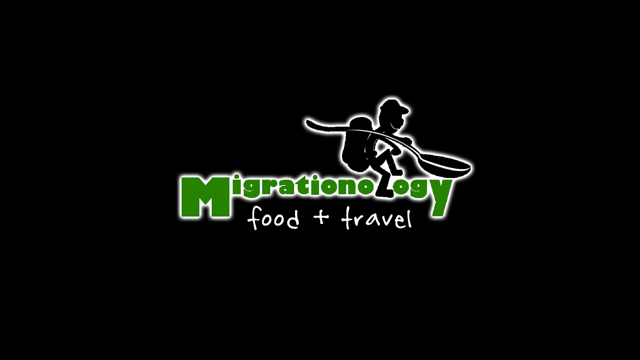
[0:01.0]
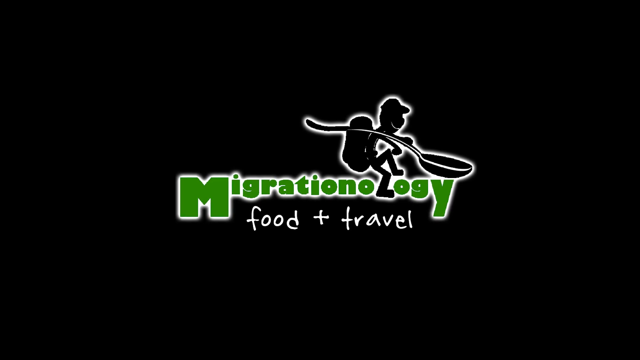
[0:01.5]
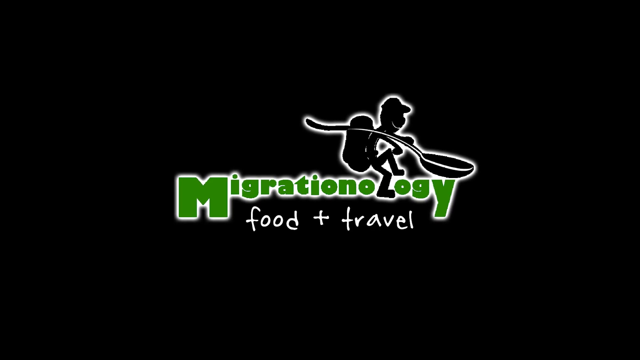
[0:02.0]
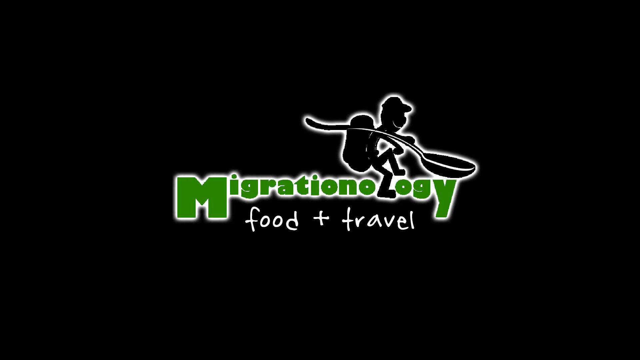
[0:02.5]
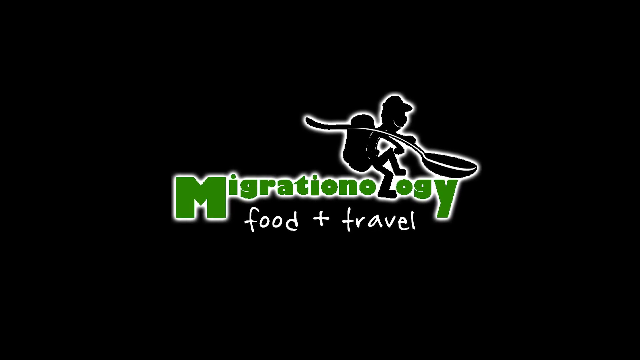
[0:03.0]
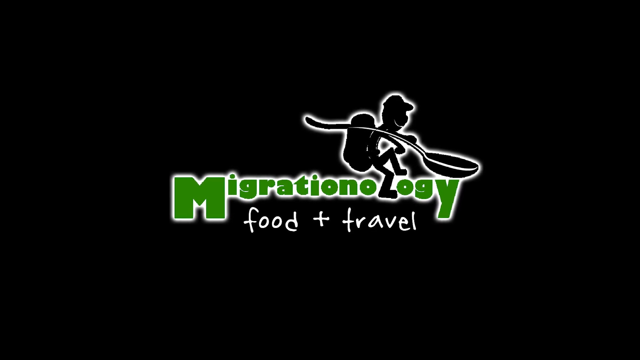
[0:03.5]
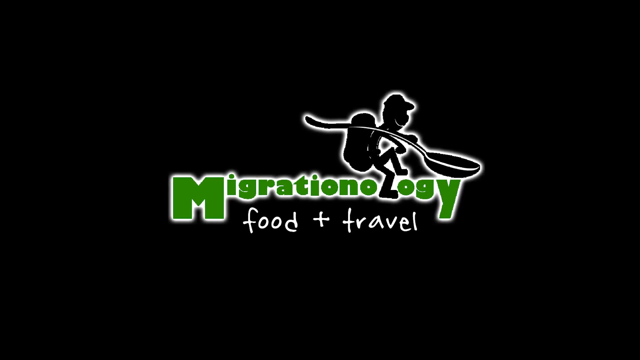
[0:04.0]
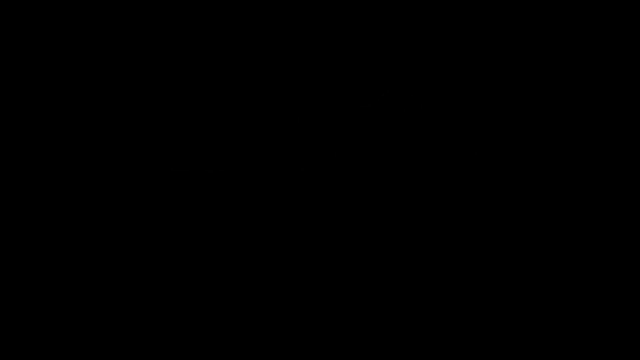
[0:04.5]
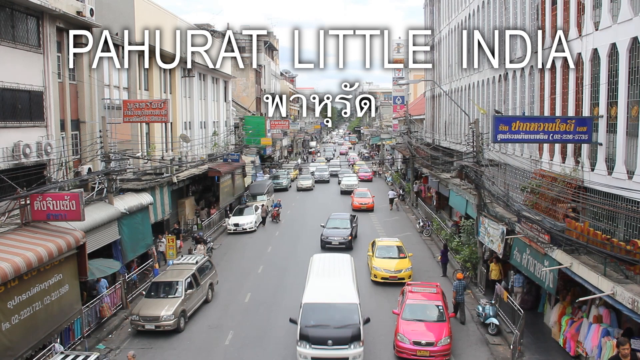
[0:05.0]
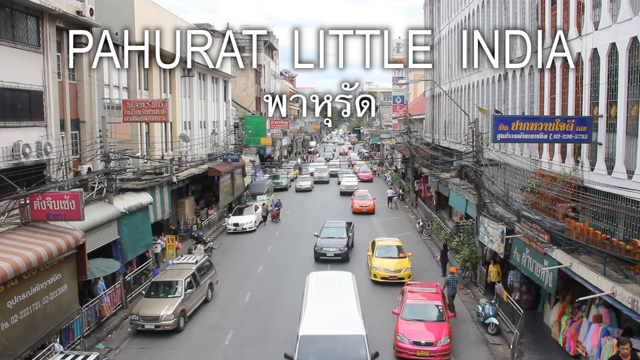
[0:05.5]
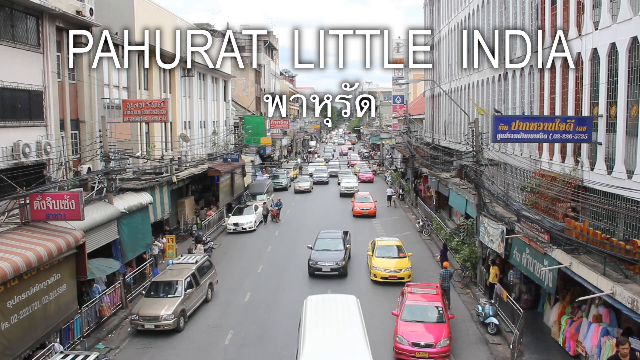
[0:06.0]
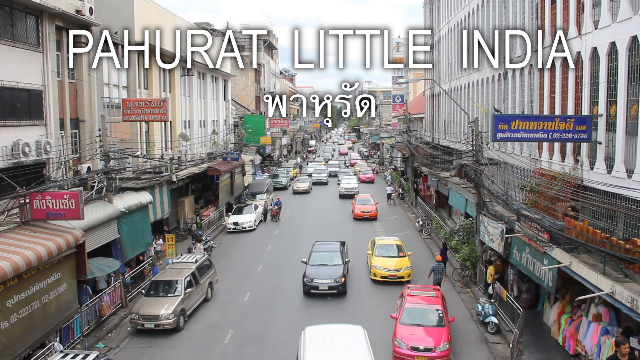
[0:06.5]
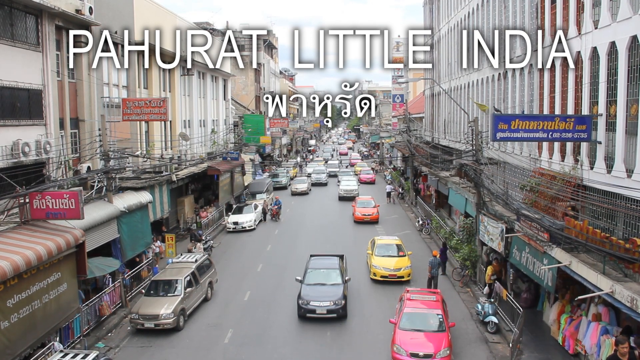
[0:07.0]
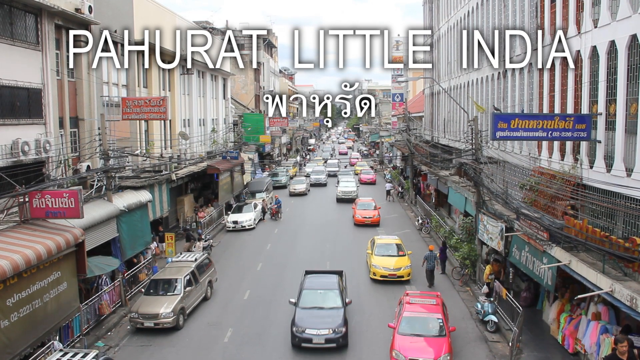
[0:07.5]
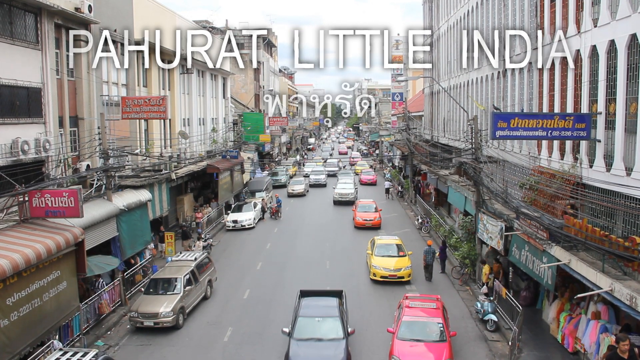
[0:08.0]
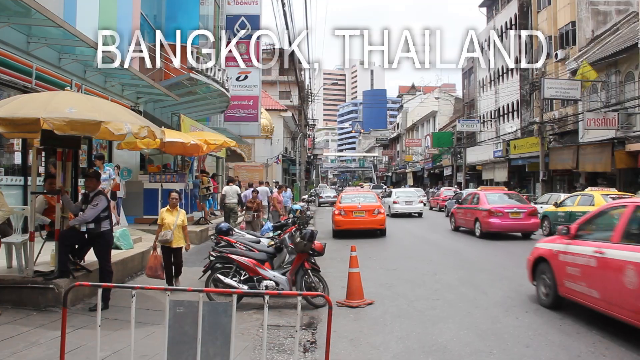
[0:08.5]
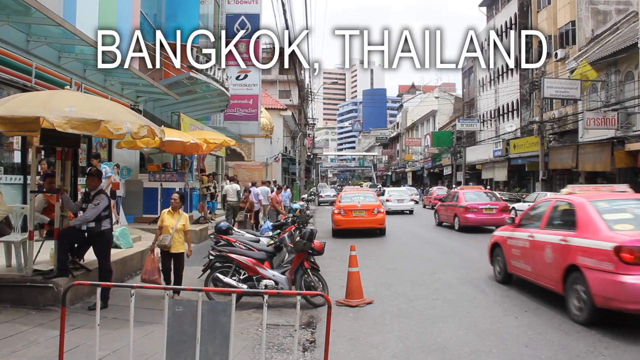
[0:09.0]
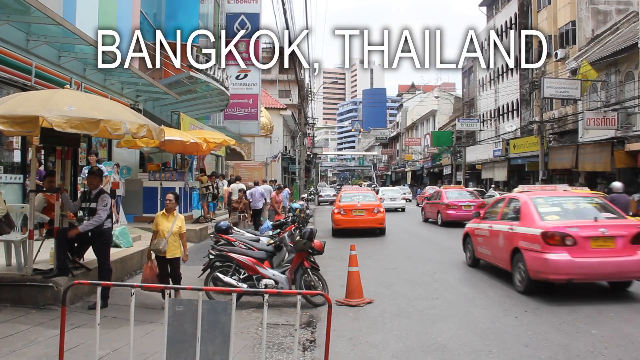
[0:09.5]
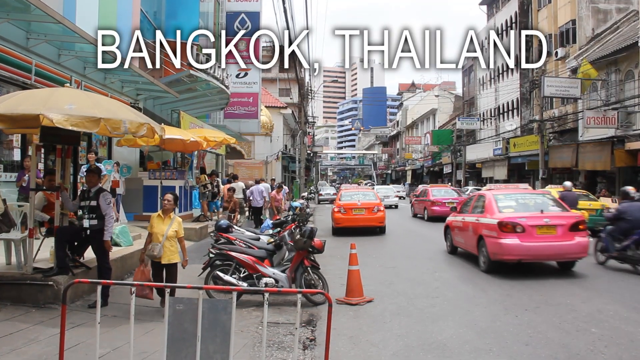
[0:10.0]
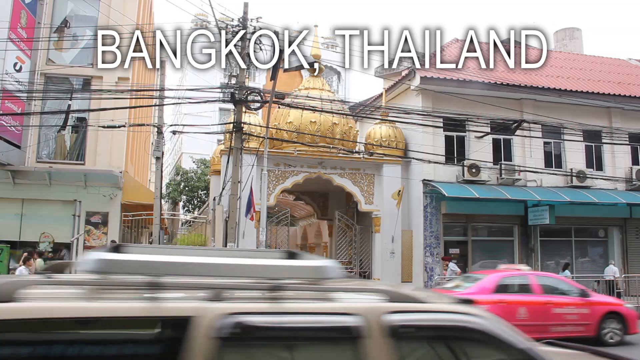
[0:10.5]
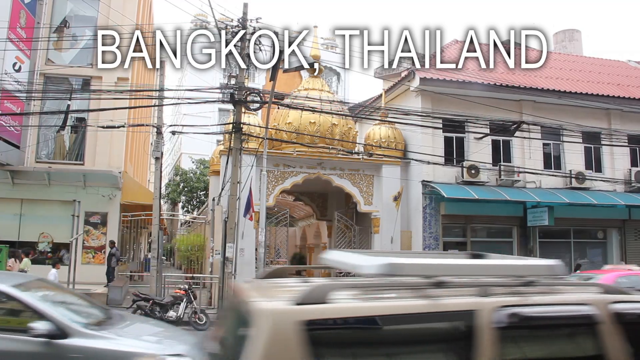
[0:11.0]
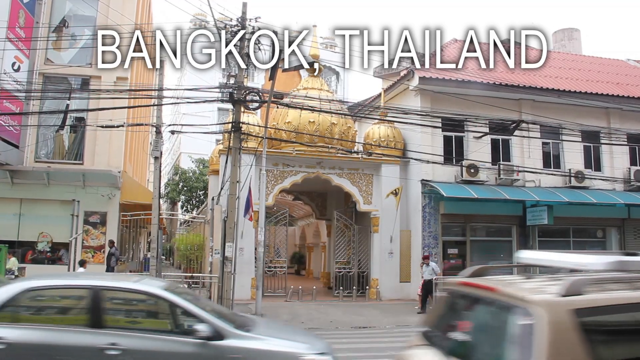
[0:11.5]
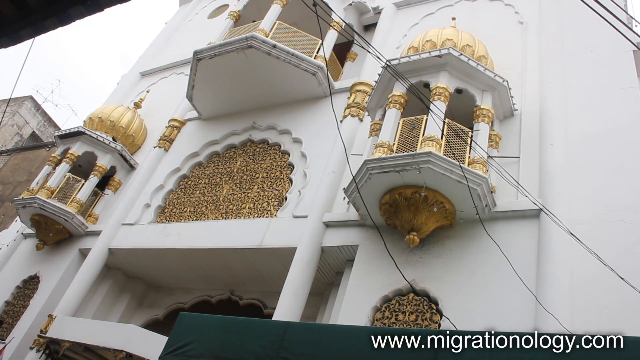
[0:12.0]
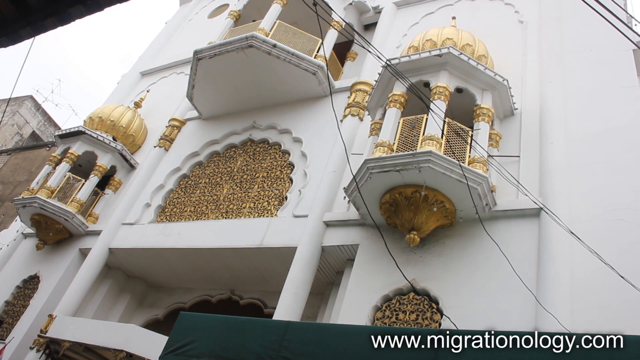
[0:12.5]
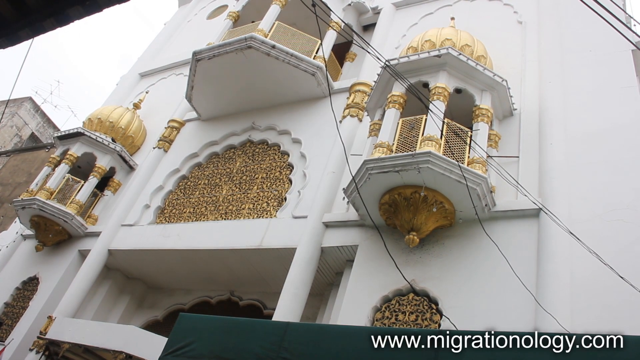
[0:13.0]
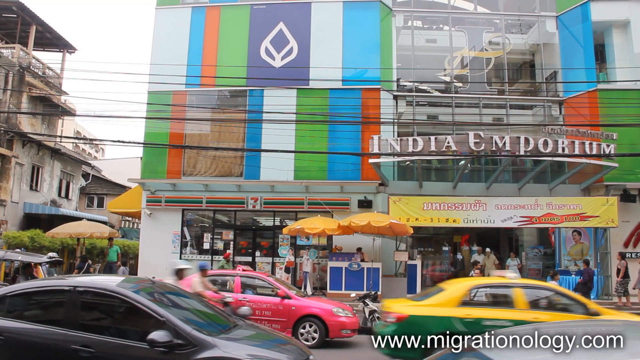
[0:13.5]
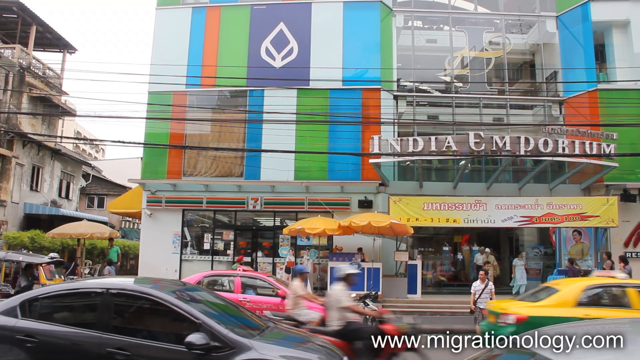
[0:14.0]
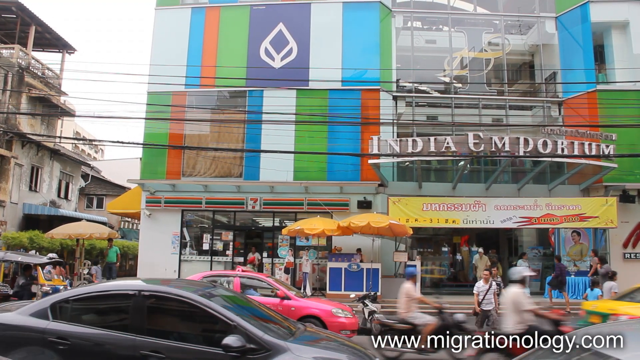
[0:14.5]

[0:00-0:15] The video opens with a logo for food and travel, then moves to Little India in Bangkok, Thailand, with a series of shots and images of Bangkok in the daytime. No food is shown yet, only buildings and the general look of the area. Pink cabs are everywhere. The building shown most is white with a lot of gold on it. A woman in a yellow shirt walks around. At the bottom of the video, the website "migrationology.com" appears, apparently the people putting the video together.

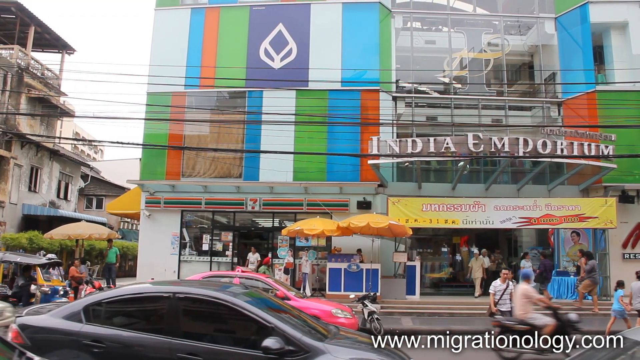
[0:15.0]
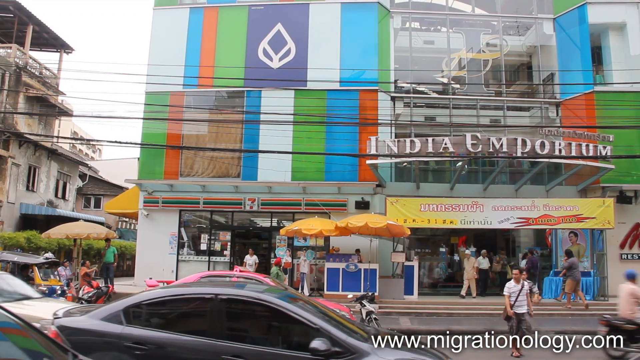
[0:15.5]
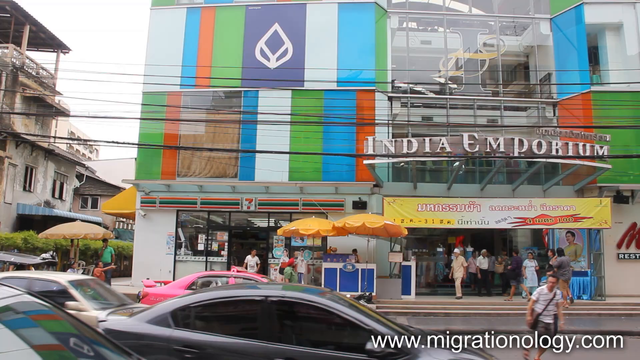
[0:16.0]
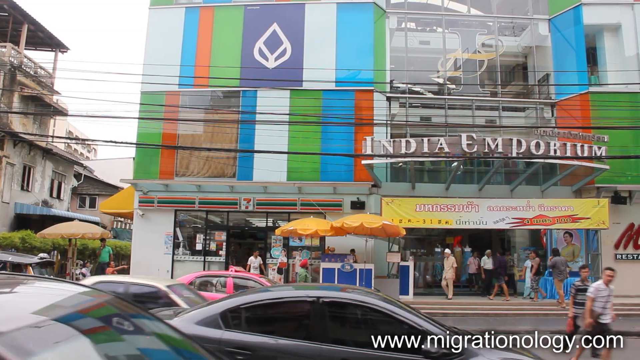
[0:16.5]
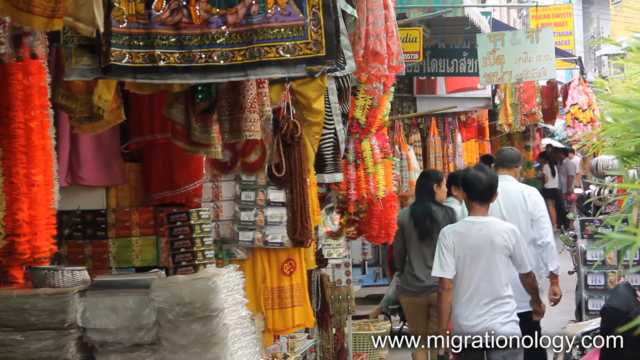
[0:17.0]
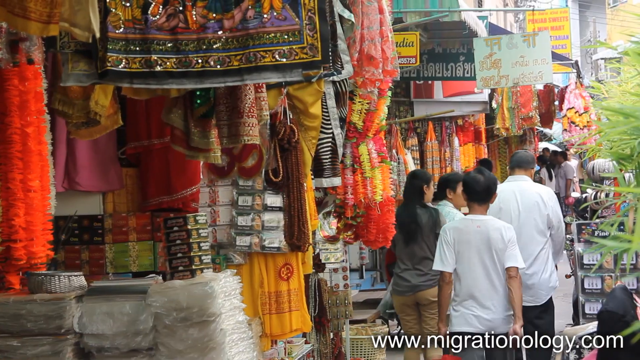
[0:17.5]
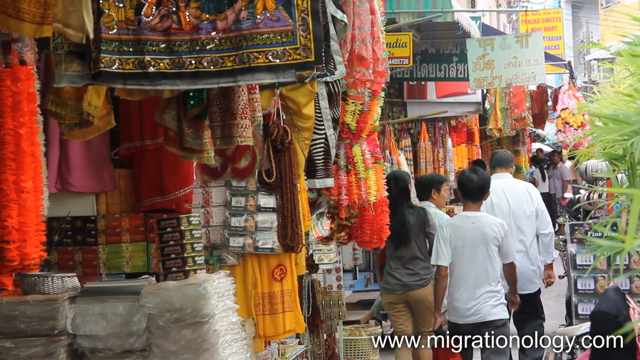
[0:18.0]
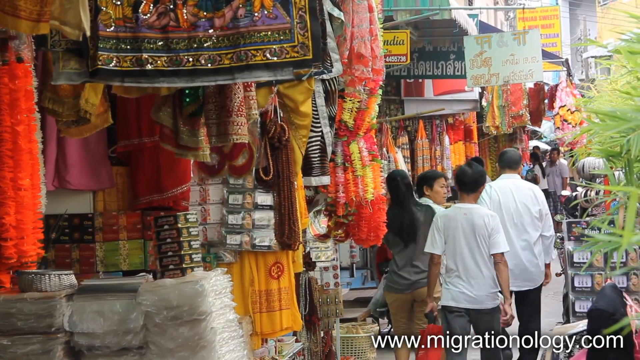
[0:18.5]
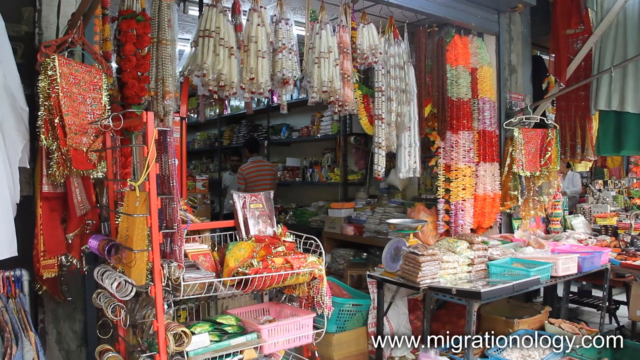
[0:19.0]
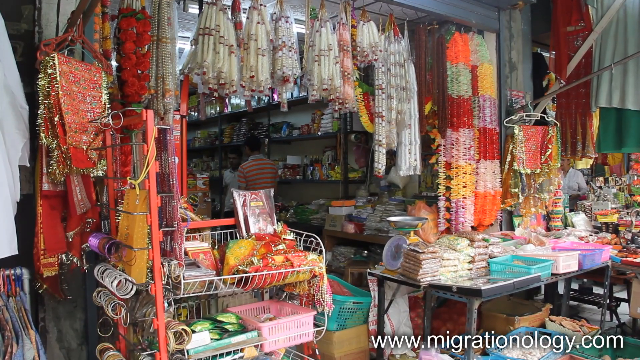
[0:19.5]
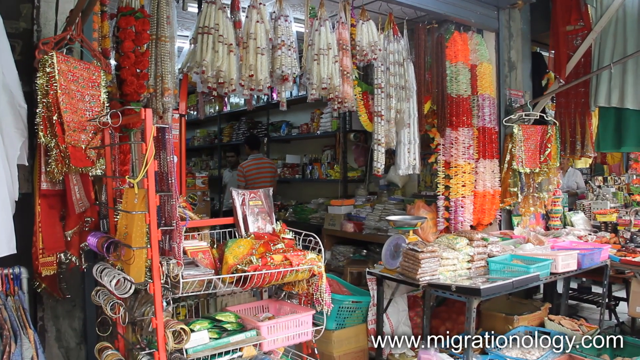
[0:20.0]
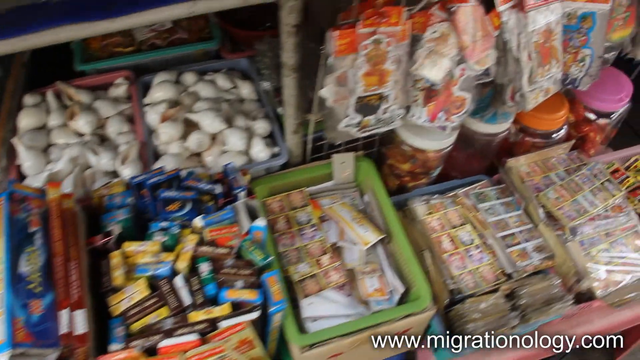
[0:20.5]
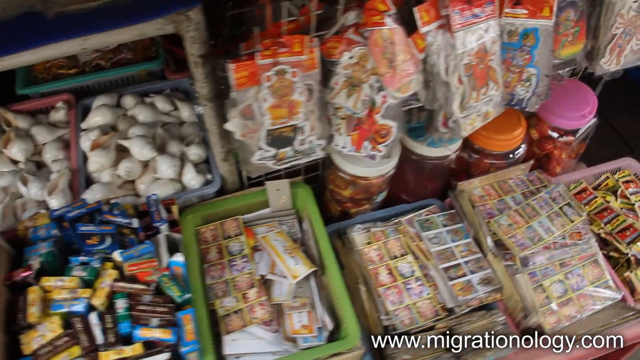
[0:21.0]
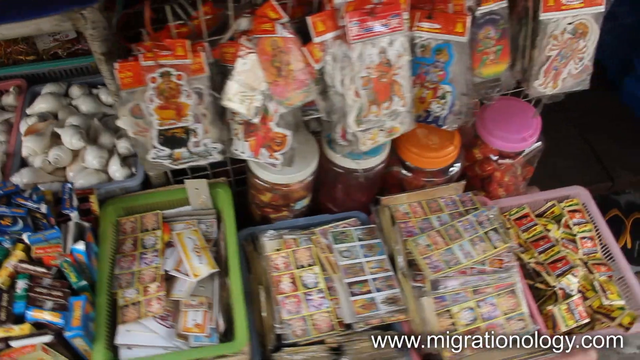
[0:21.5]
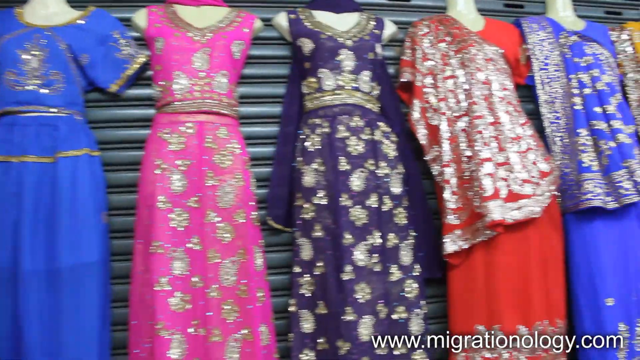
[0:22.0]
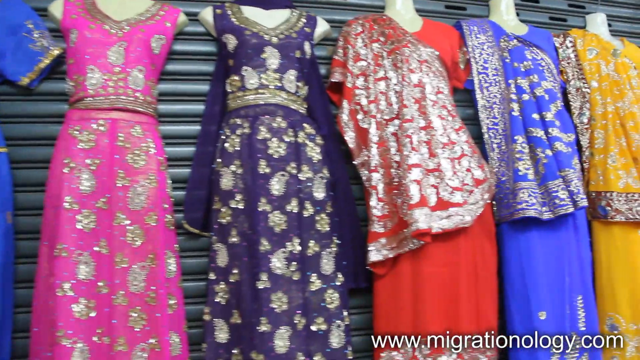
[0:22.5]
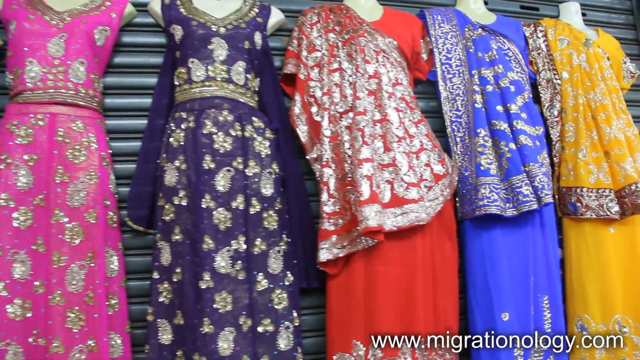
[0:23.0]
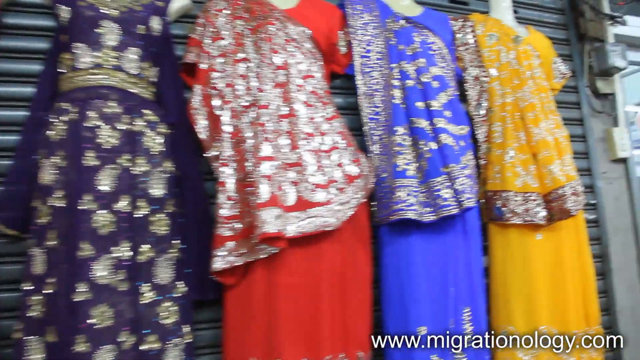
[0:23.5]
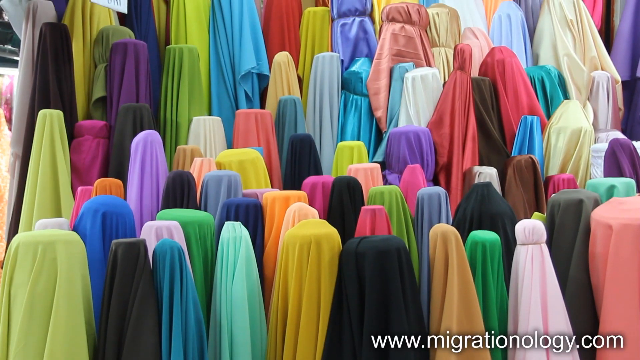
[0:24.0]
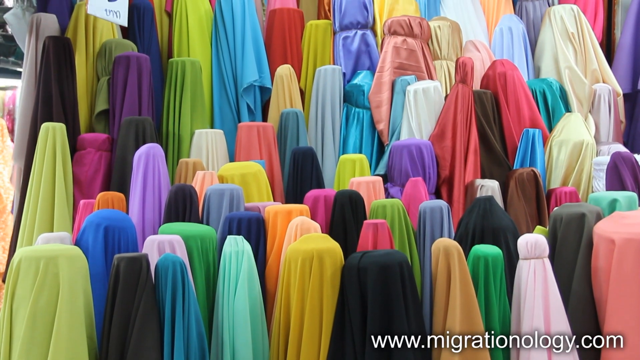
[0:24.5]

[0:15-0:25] A place called India Emporium is shown, with a number of vendors or stalls offering headscarves and different types of Indian apparel, along with clothes and food. It is still daytime, and the shots focus on products for sale rather than on individual people. The camera kind of pans through the vendors' offerings, and not everything on one table can be made out. The clothes, especially the headscarves, come in many different colors, filling the scene with colored fabrics.